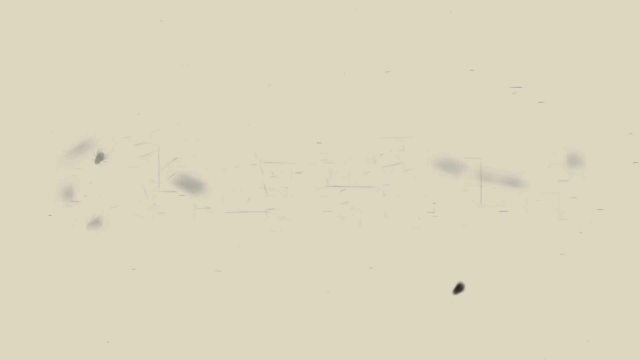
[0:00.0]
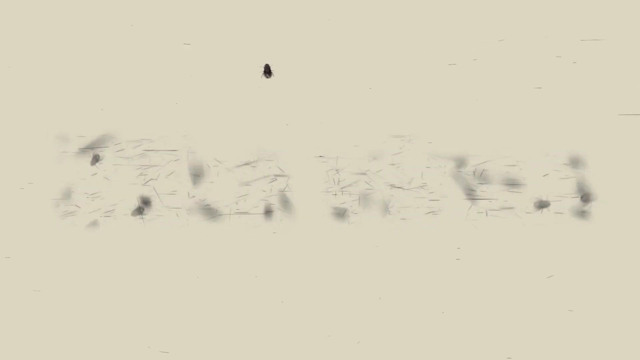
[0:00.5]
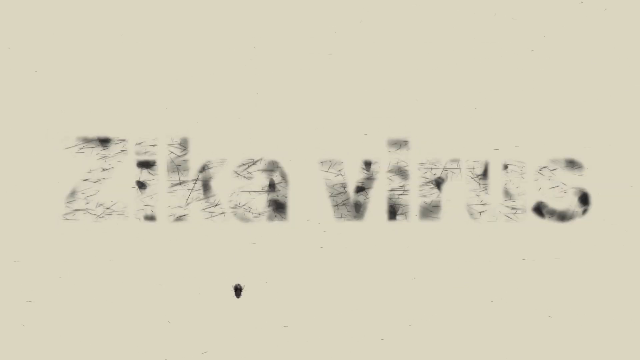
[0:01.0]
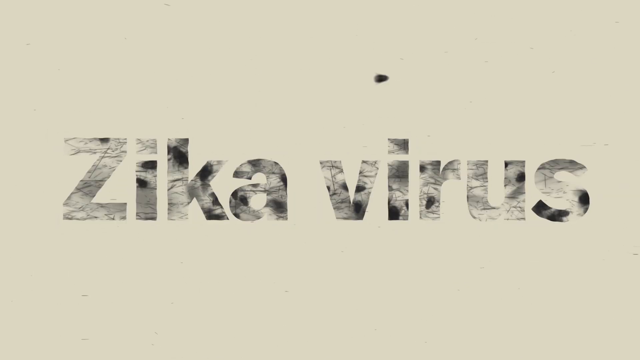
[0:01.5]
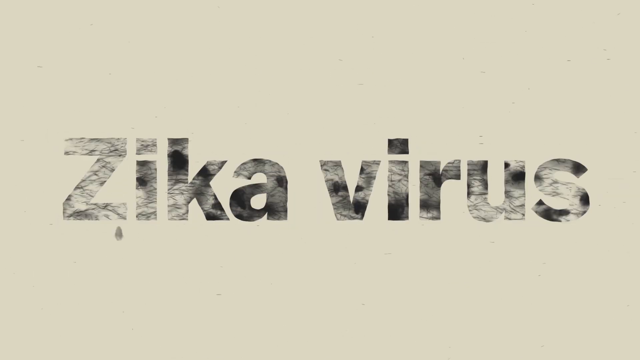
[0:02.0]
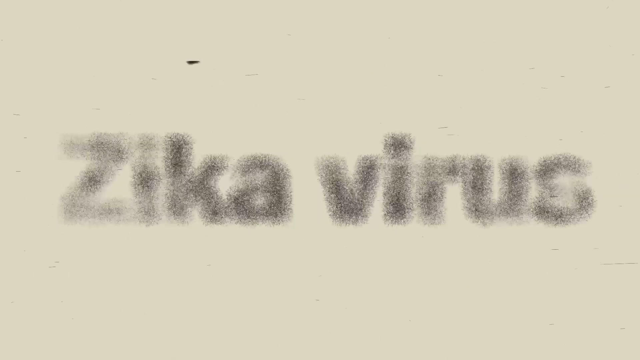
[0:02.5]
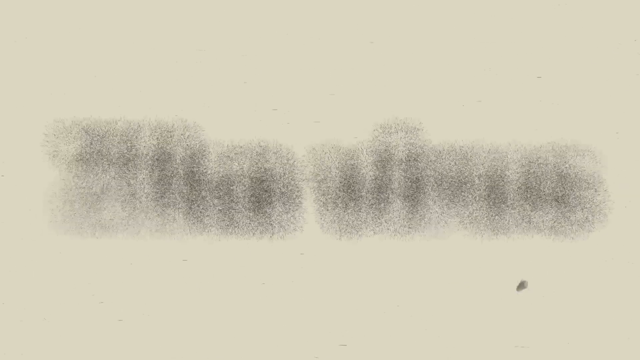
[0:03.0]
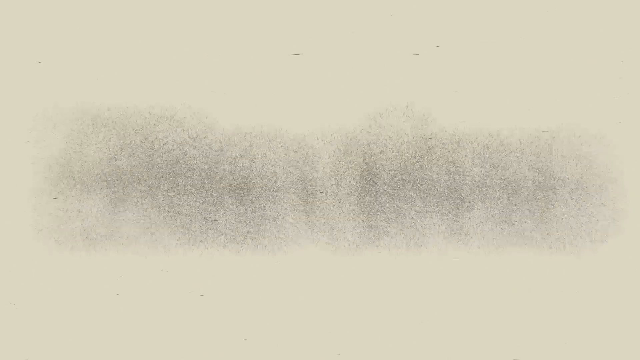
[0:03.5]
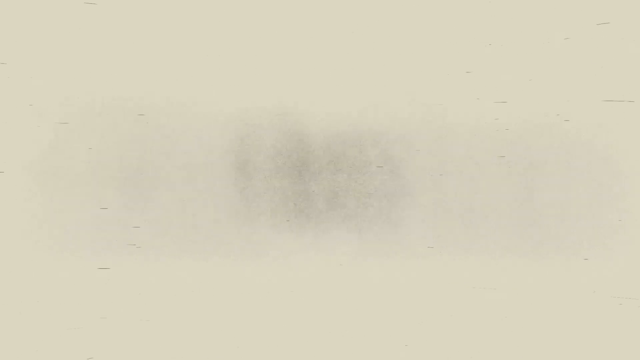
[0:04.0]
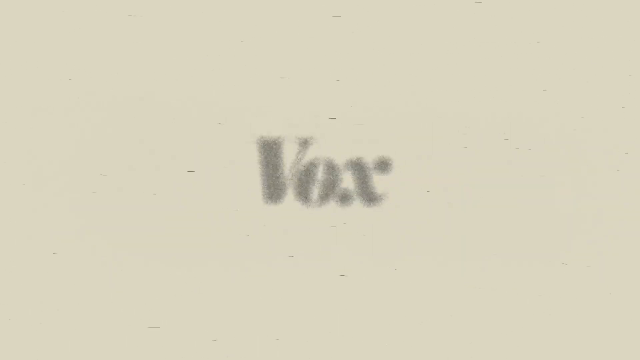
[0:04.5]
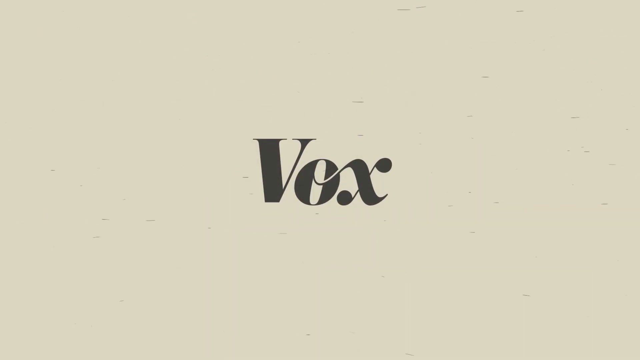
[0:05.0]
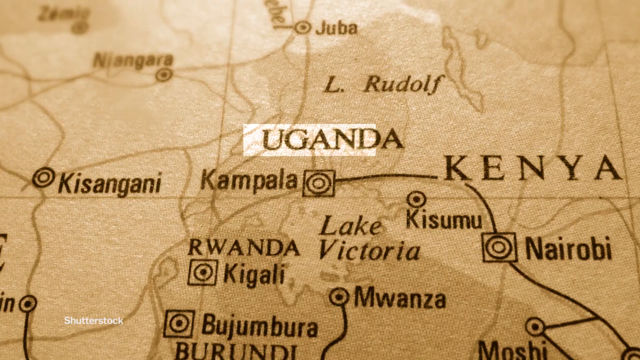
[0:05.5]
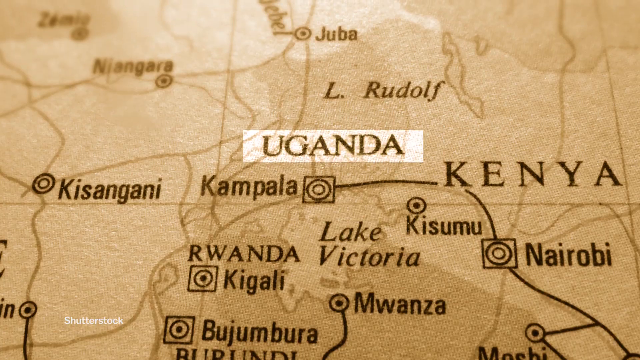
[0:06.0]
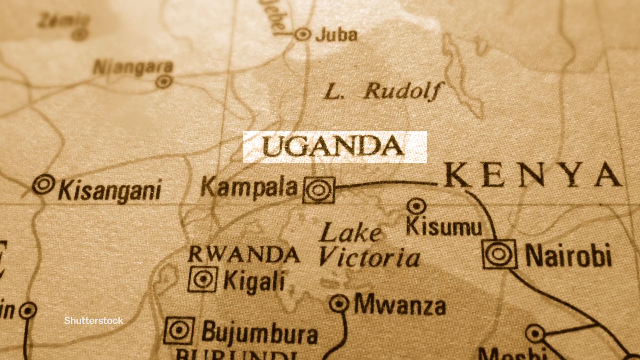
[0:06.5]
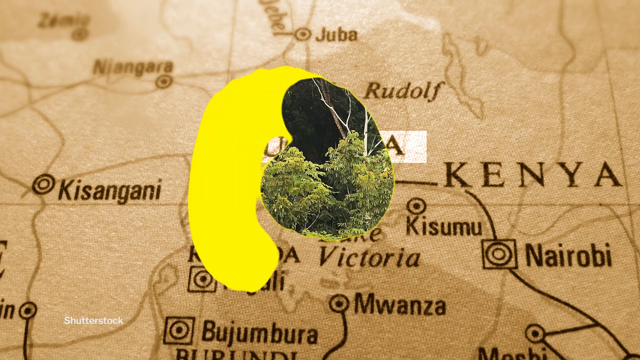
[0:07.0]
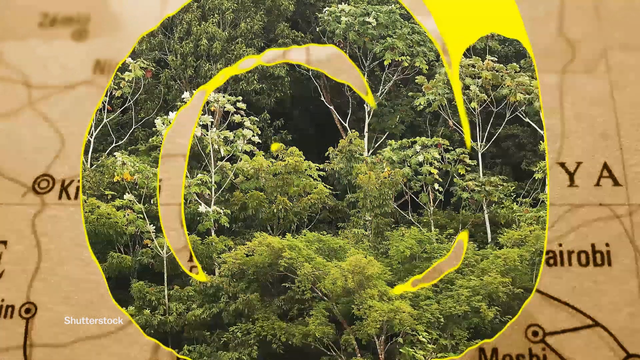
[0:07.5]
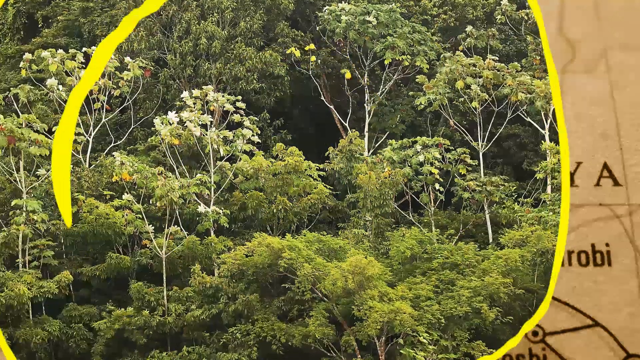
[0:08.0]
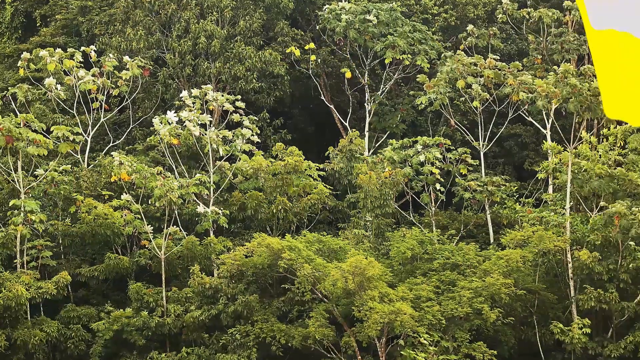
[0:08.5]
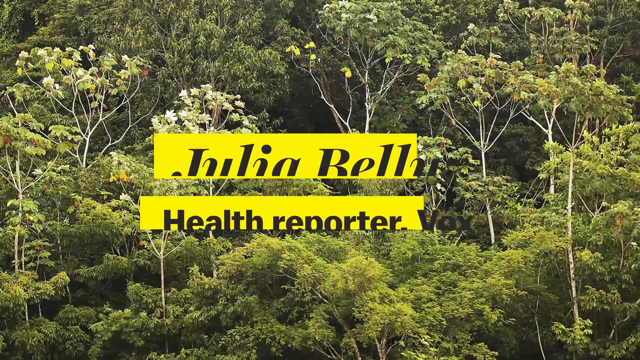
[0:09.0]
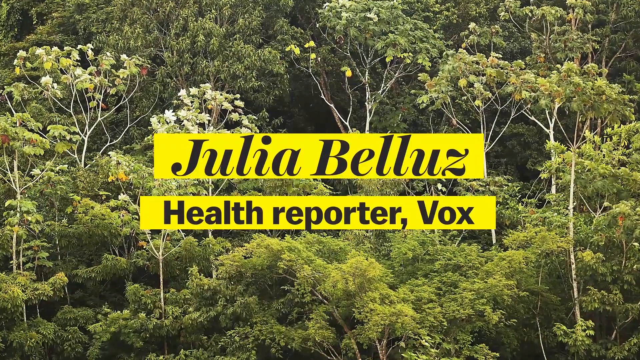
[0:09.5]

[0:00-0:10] The video is about the Zika virus, and the host is identified as Julia Belouz, health reporter for Vox. It starts out with foliage, a lot of green, almost like a jungle. A map focuses on Uganda, with surrounding places labeled such as Kenya, Rwanda, Lake Victoria, Juba, Mwanza and Kigali; the region is possibly Africa.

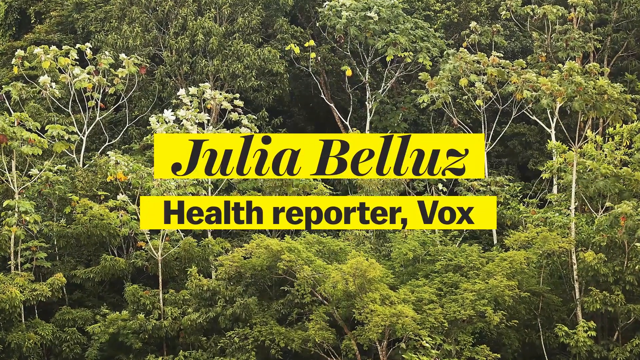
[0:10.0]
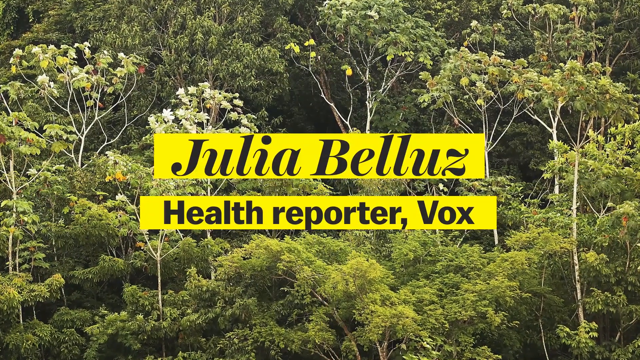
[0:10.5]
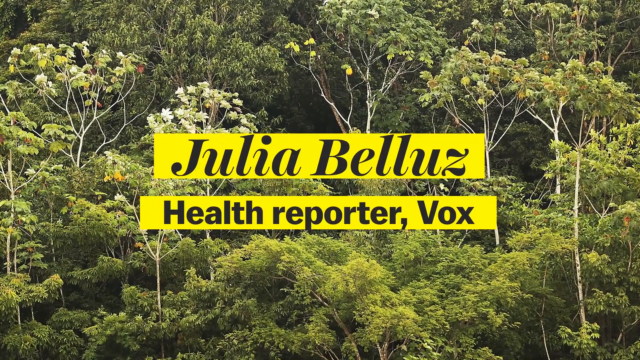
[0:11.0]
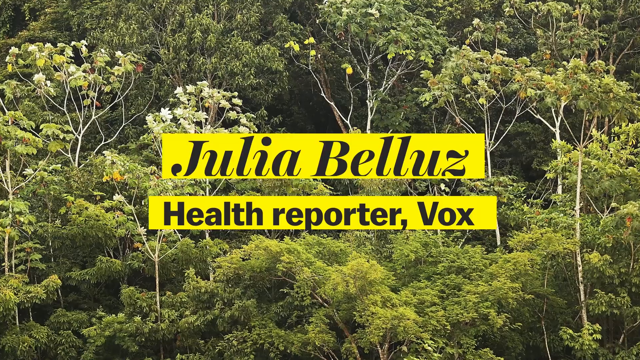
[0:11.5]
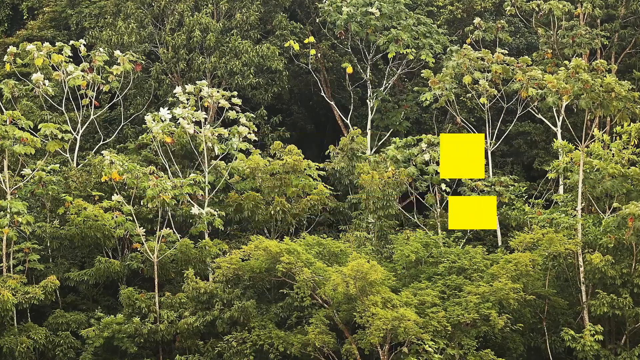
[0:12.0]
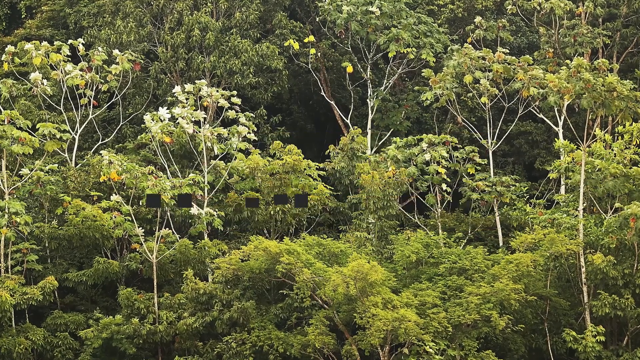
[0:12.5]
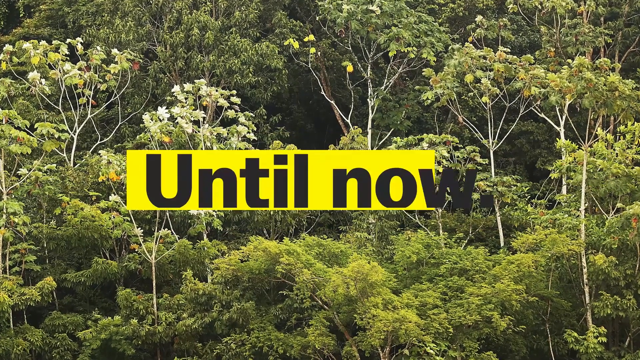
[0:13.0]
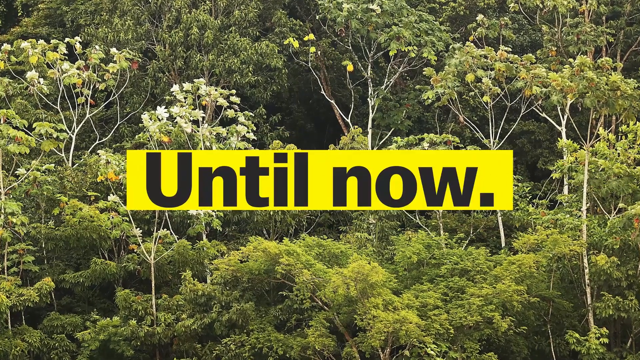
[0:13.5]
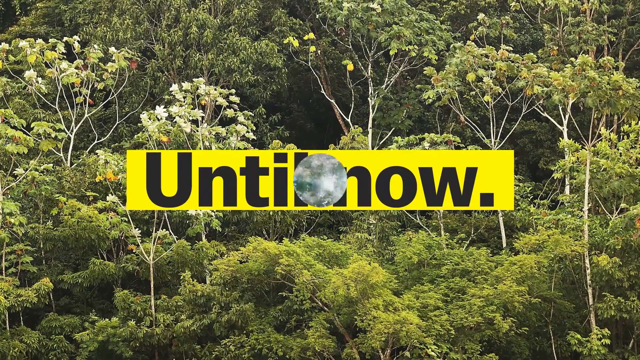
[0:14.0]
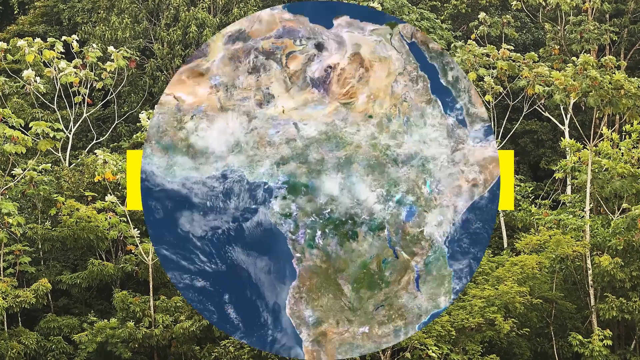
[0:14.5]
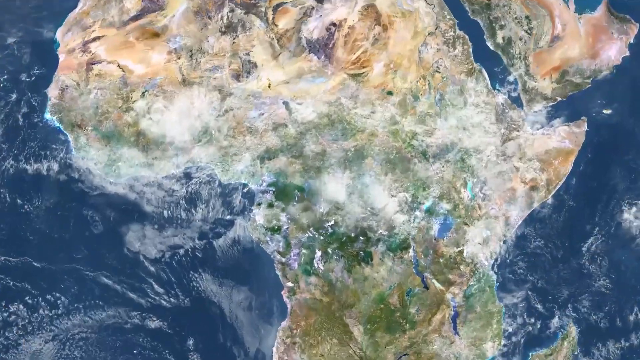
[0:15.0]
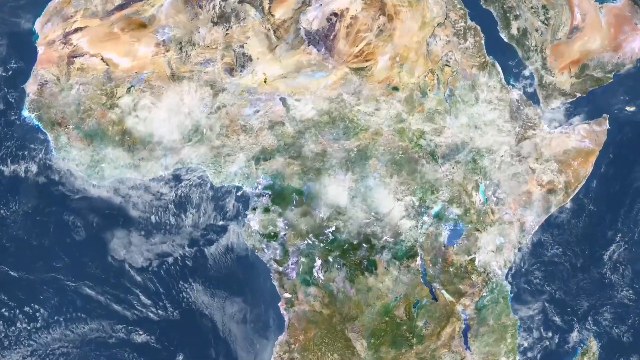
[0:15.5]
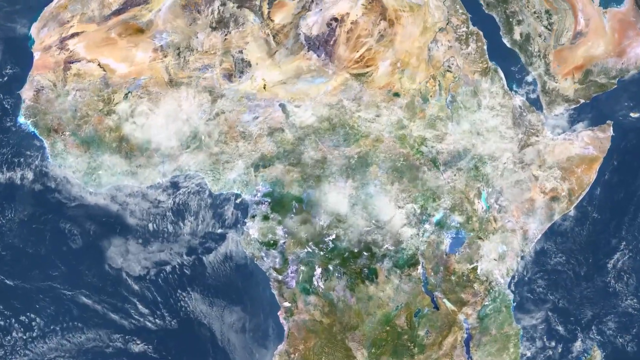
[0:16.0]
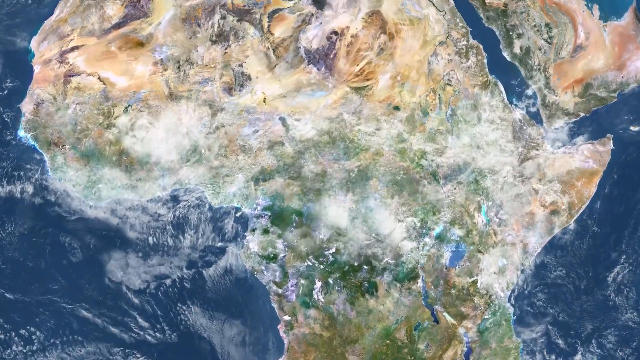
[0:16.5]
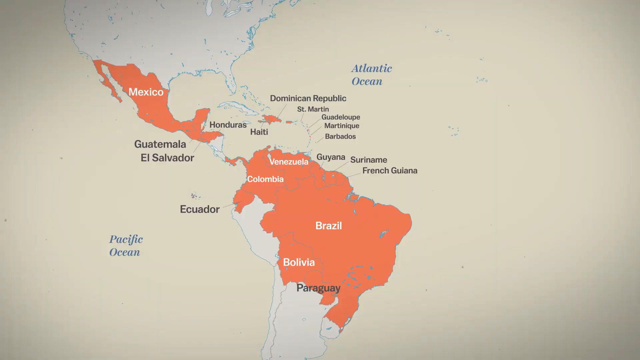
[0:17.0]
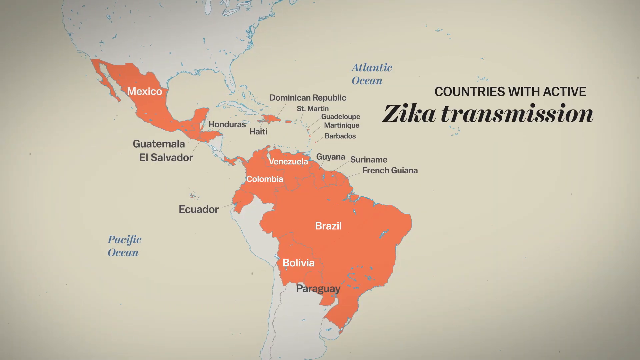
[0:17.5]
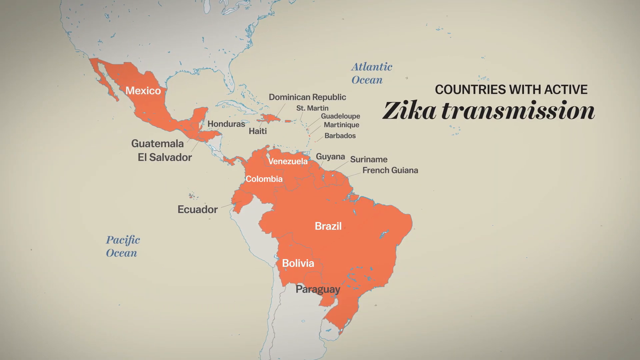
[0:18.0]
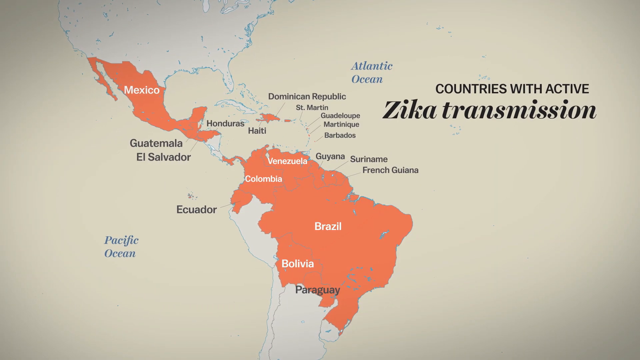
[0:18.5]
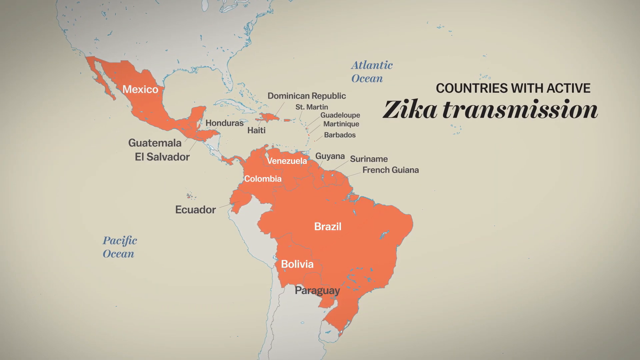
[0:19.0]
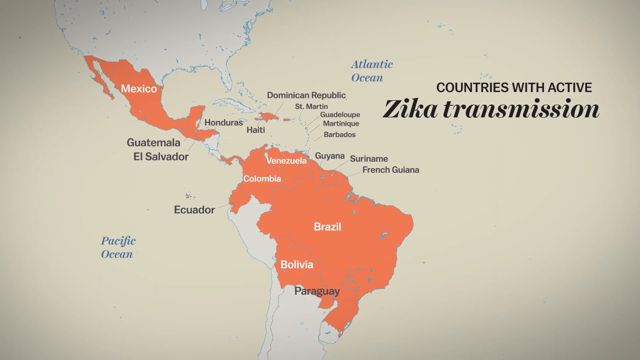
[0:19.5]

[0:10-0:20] The text "until now" appears. An image of the earth is shown, then Brazil, with the countries with active Zika transmission: Brazil, Bolivia, Guatemala, El Salvador, Honduras and Ecuador, with the Pacific Ocean to the left. The foliage returns with the words "until now." The earth is then shown in a satellite photo, with the Atlantic Ocean and the Pacific Ocean nearby.